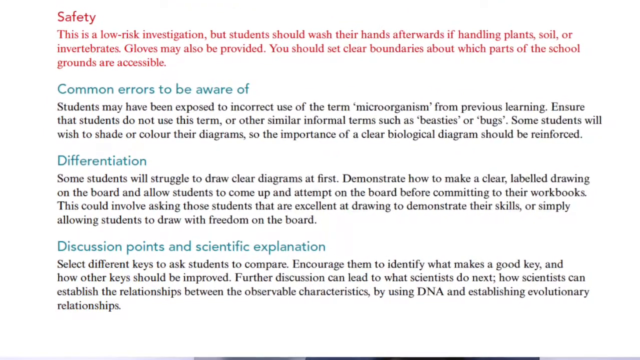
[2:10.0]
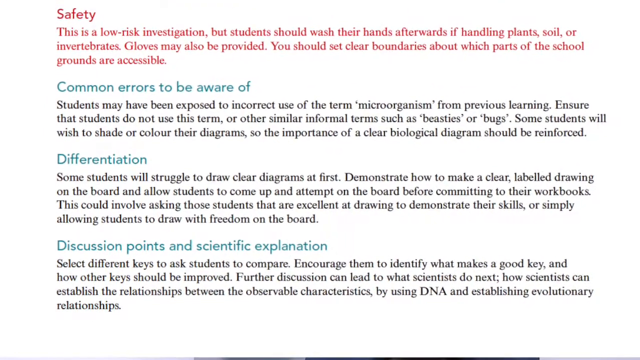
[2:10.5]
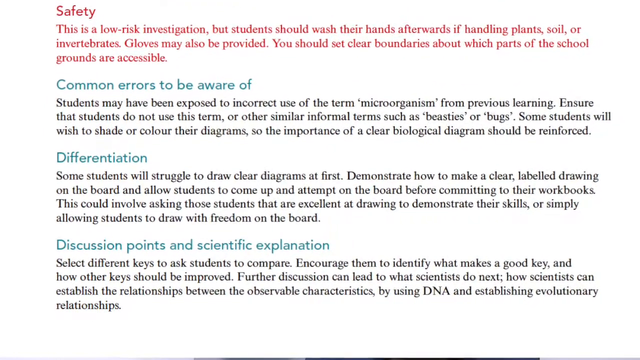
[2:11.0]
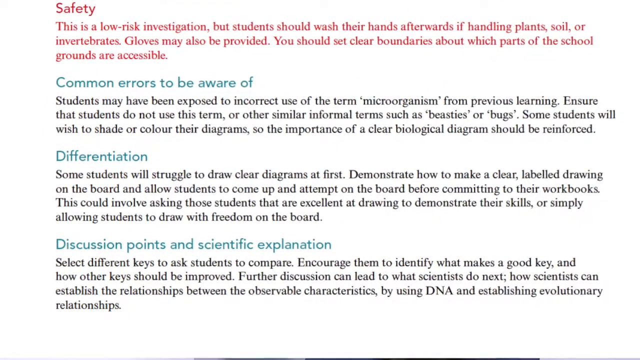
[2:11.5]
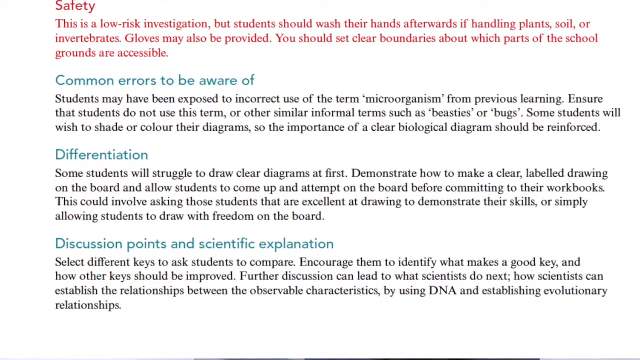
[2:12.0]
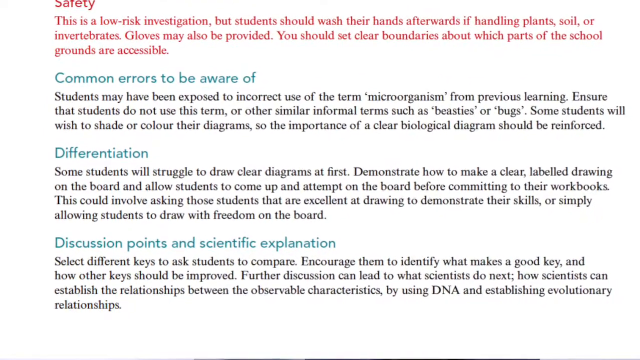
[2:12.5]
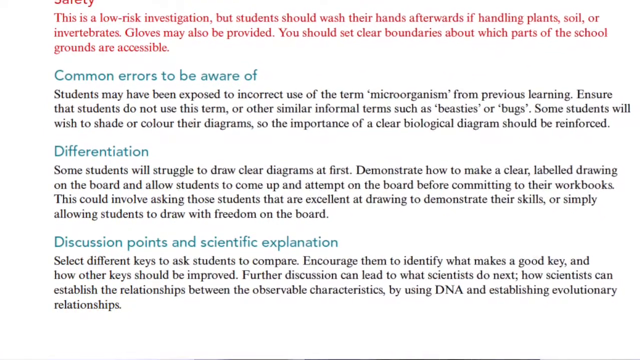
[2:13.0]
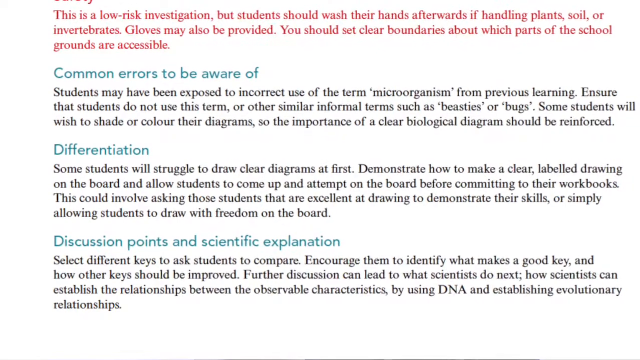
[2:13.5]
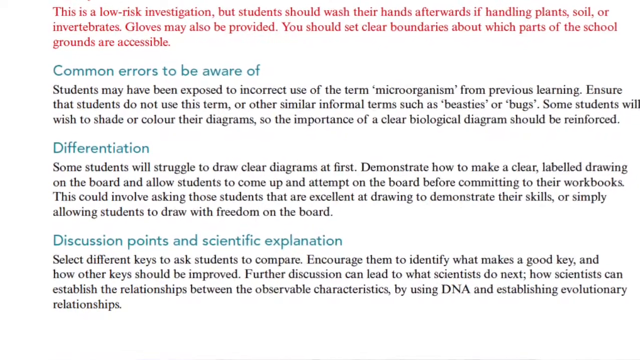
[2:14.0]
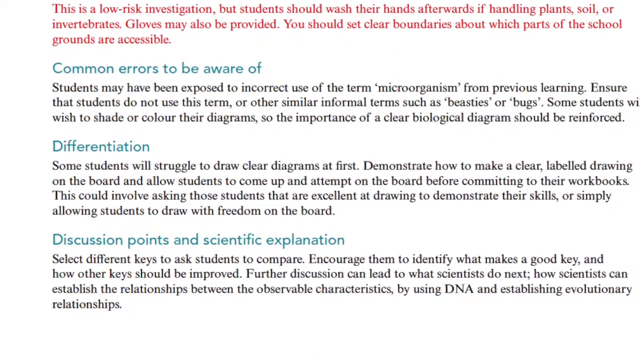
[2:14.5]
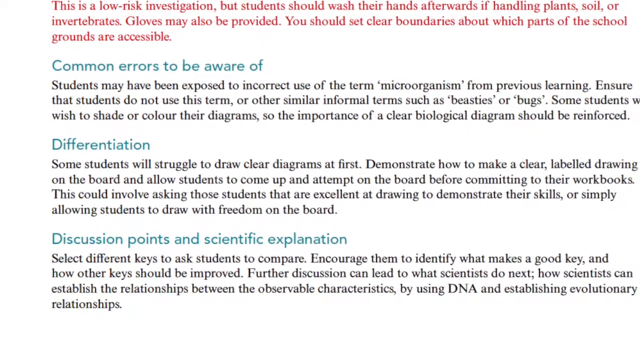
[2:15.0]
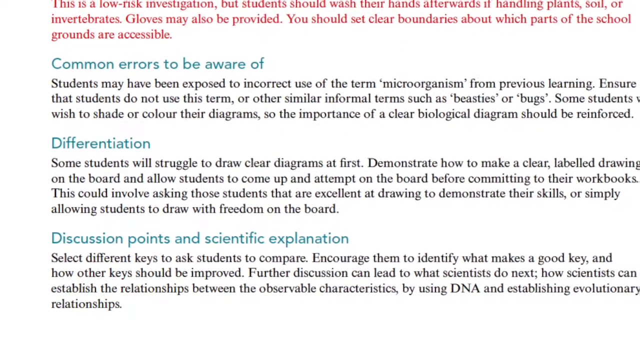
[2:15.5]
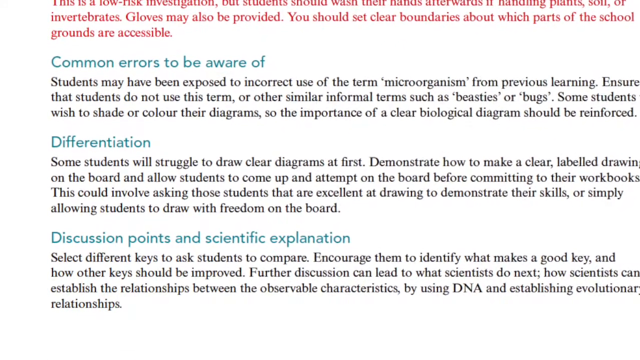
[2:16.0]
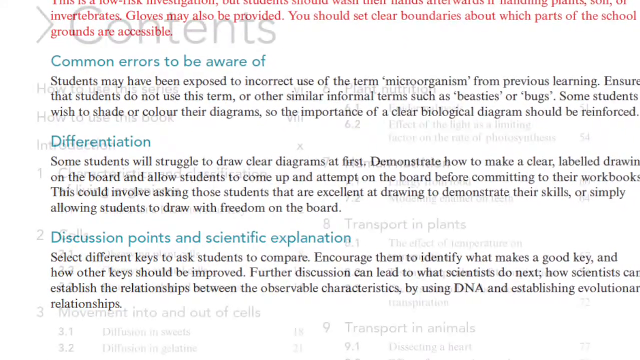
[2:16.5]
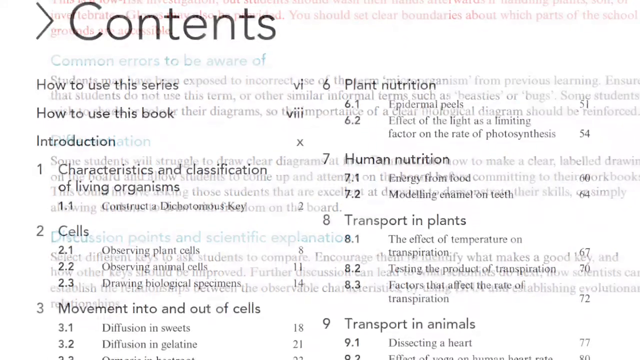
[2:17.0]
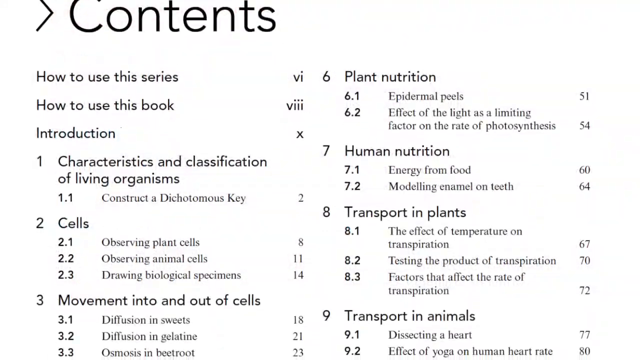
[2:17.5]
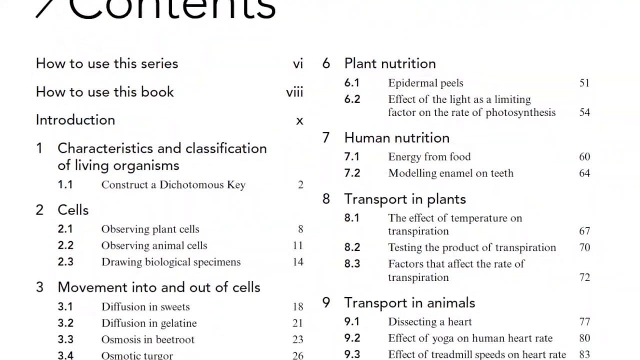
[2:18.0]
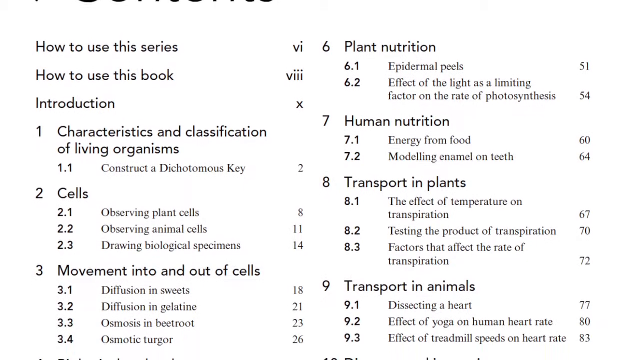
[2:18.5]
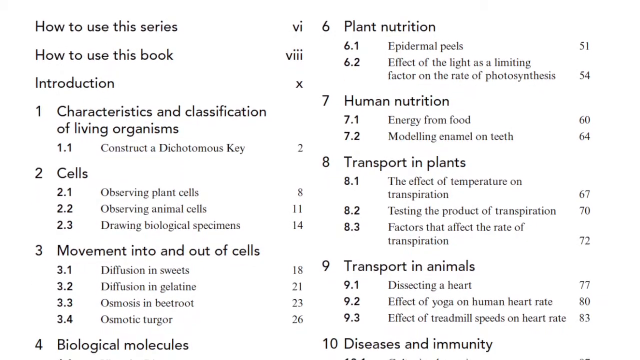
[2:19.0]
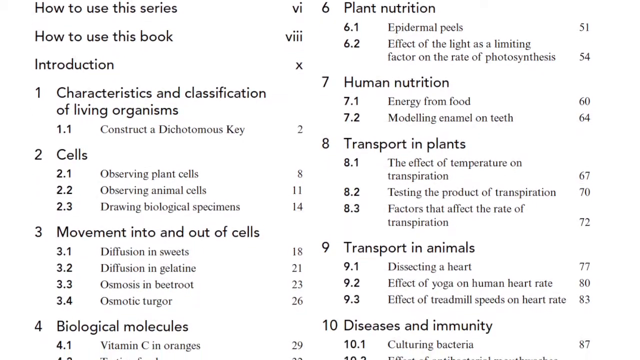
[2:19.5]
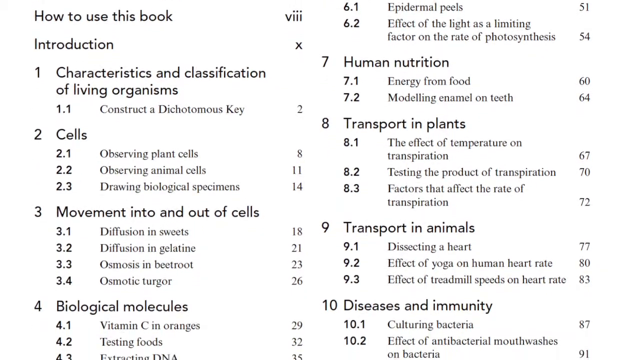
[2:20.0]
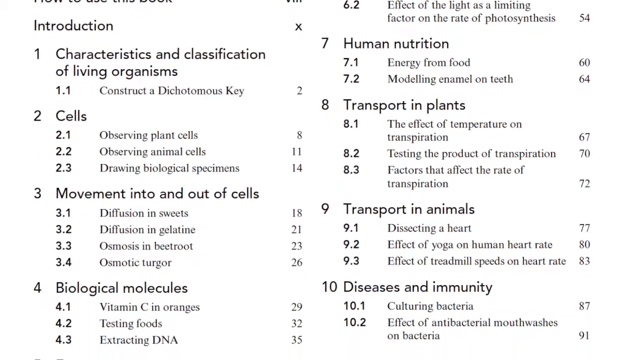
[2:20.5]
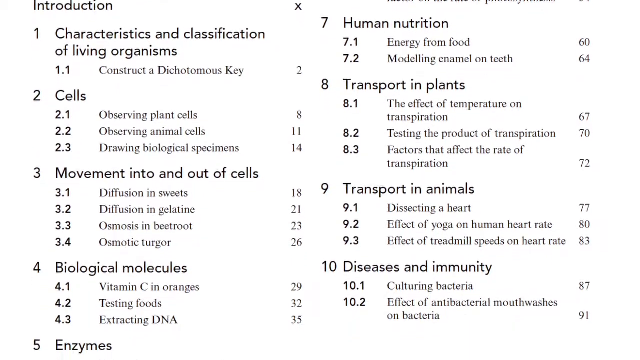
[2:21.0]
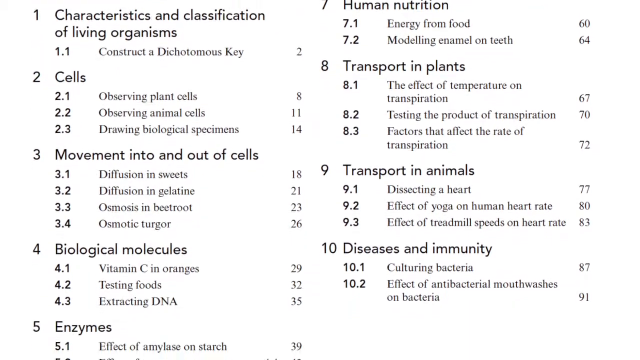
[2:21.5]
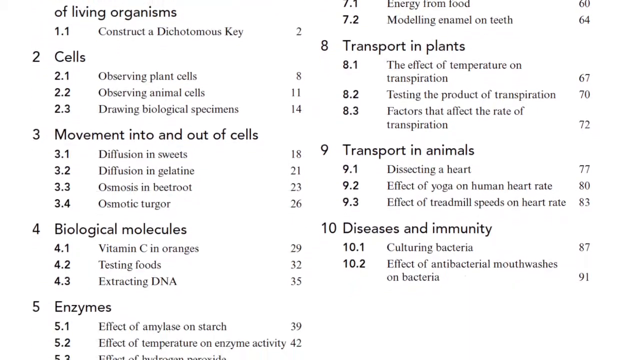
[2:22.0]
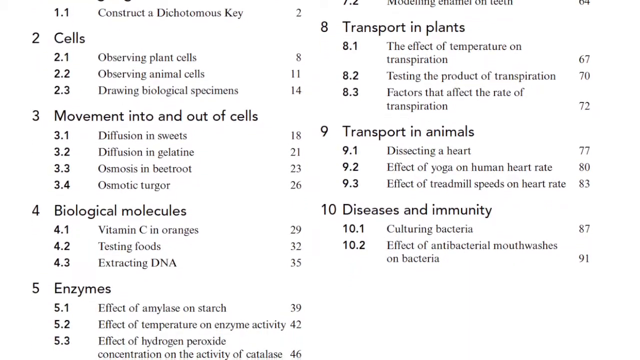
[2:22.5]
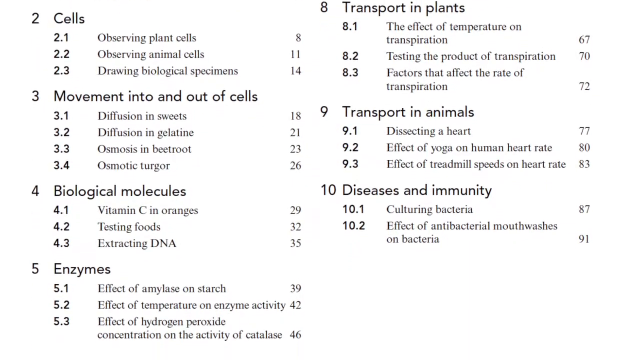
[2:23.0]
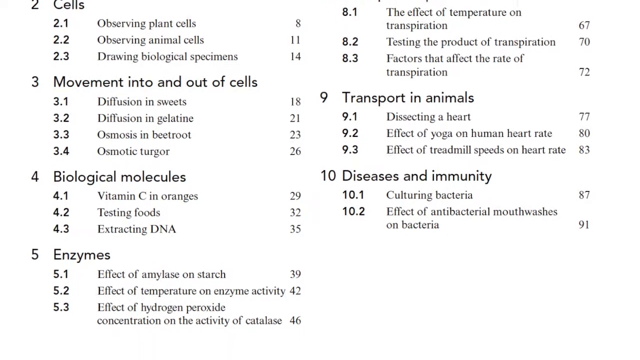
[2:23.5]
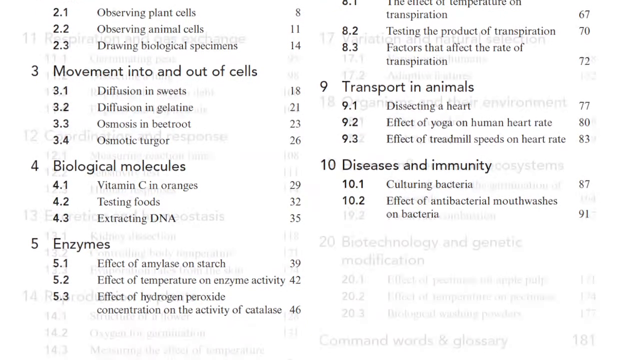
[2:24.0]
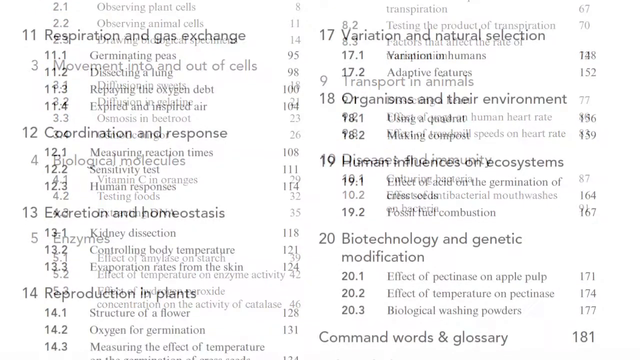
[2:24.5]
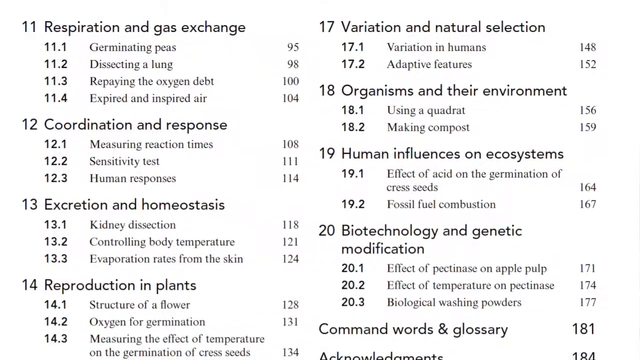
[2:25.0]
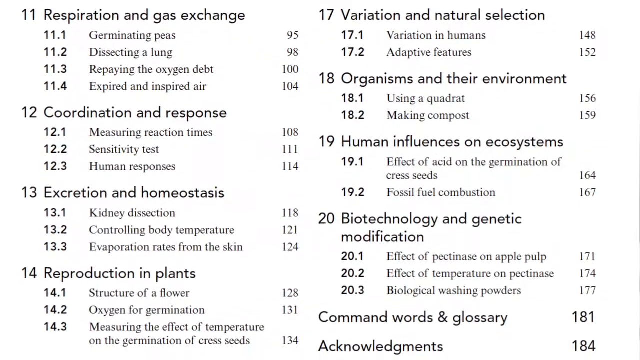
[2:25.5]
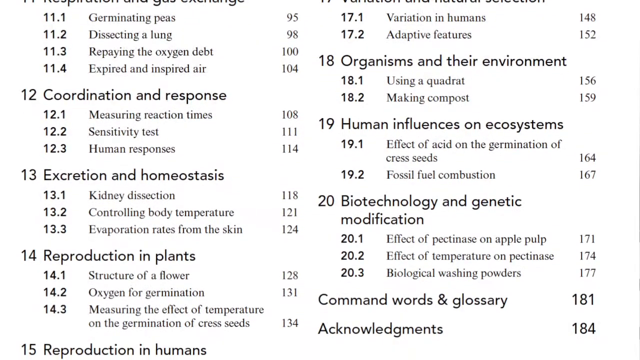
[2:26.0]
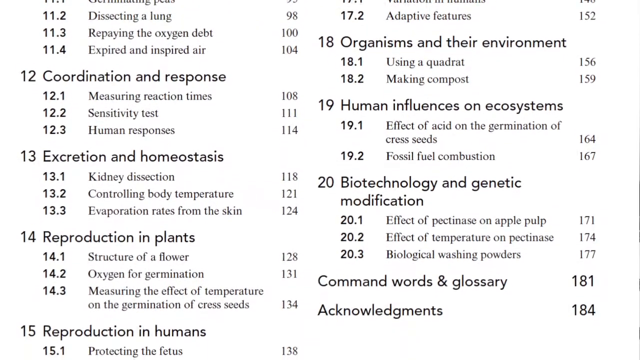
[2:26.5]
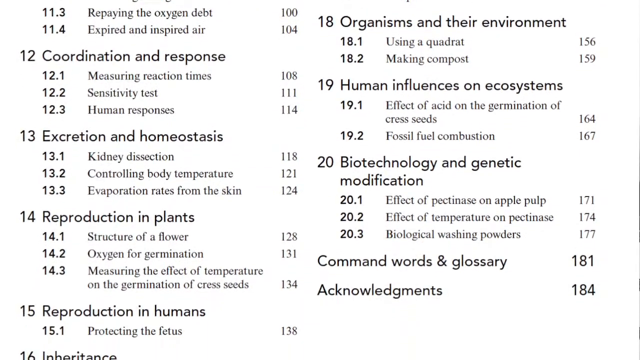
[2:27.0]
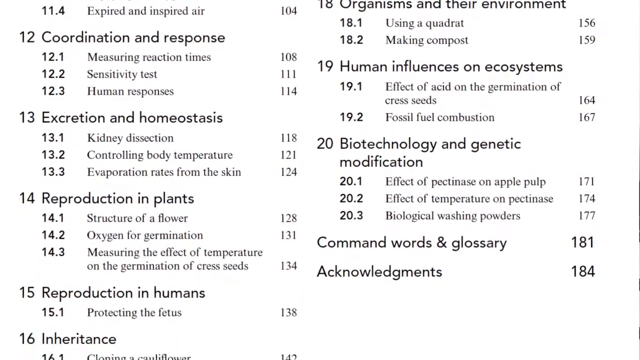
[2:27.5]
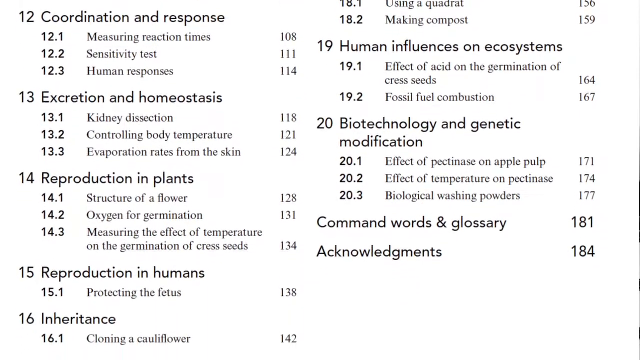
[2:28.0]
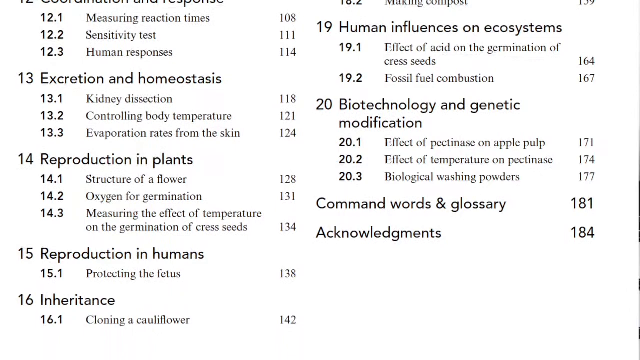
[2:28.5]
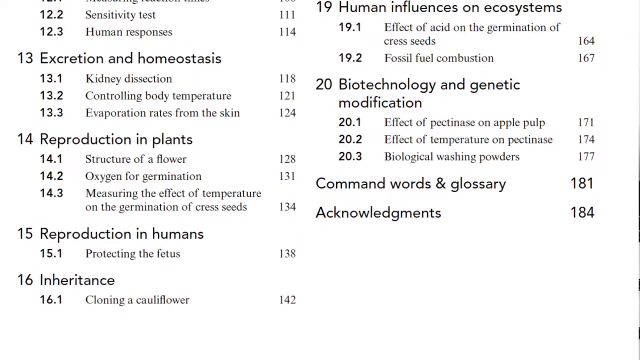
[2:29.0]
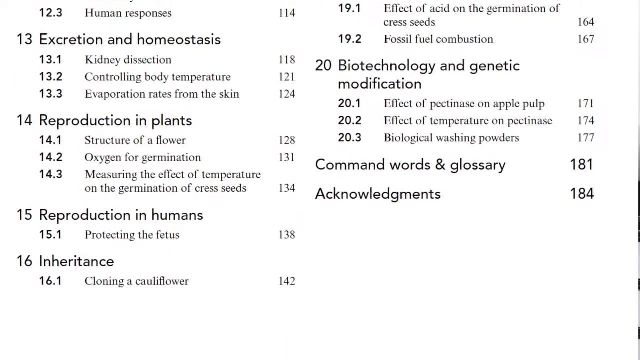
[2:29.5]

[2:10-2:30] The heading "safety" appears at the top in pink, followed by the text "This is a low-risk investigation, but students should wash their hands afterwards if handling plants, soil or invertebrates. Gloves may also be provided. You should set clear boundaries about which parts of the school grounds are accessible." Below, a heading in blue reads "common errors to be aware of," with the text "Students may have been exposed to incorrect use of the term microorganism from previous learning. Ensure that students do not use this term or other similar informal terms such as beasties or bugs. Some students will wish to shade or colour their diagrams, so the importance of a clear biological diagram should be reinforced." Next is the heading "differentiation" with the text "Some students will struggle to draw clear diagrams at first. Demonstrate how to make a clear label drawing on the board and allow students to come up and attempt on the board before committing to their workbooks. This could involve asking those students that are excellent at drawing to demonstrate their skills or simply allowing students to draw with freedom on the board." Under this is the heading "discussion points and scientific explanation," followed by the words "select different keys to ask students to compare."